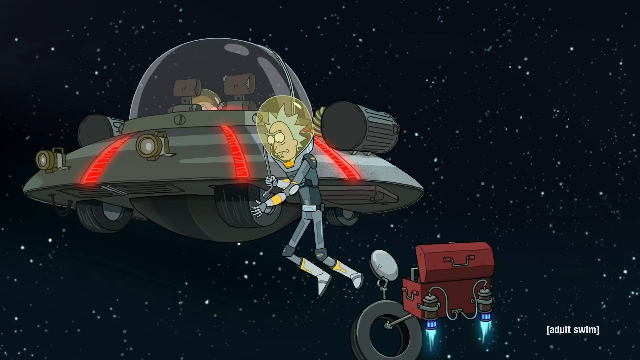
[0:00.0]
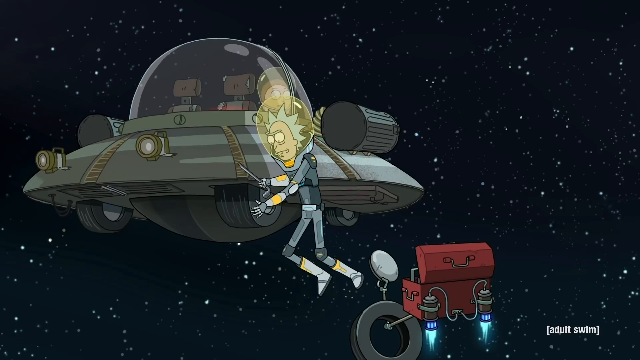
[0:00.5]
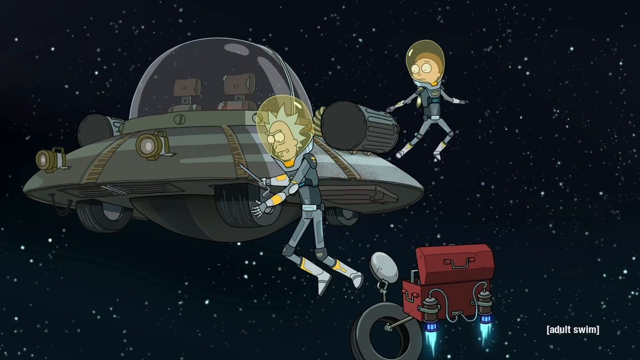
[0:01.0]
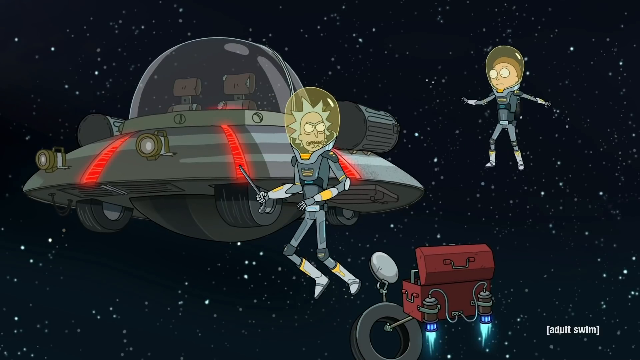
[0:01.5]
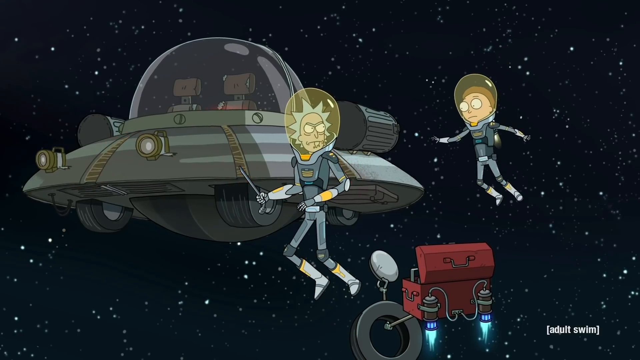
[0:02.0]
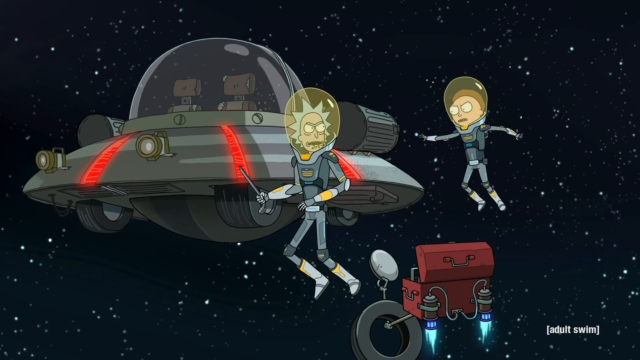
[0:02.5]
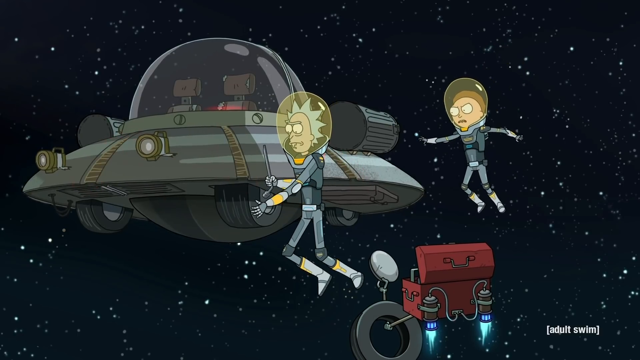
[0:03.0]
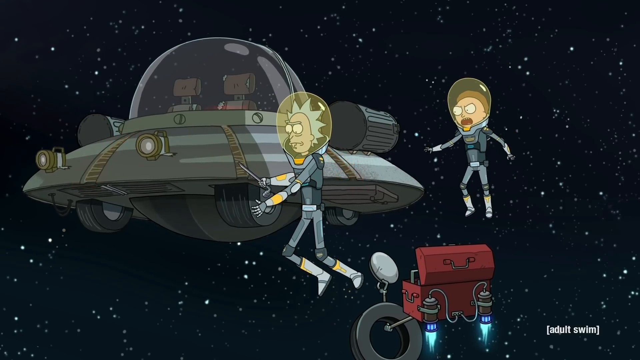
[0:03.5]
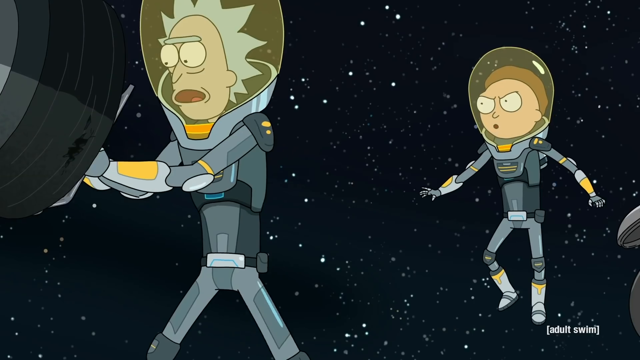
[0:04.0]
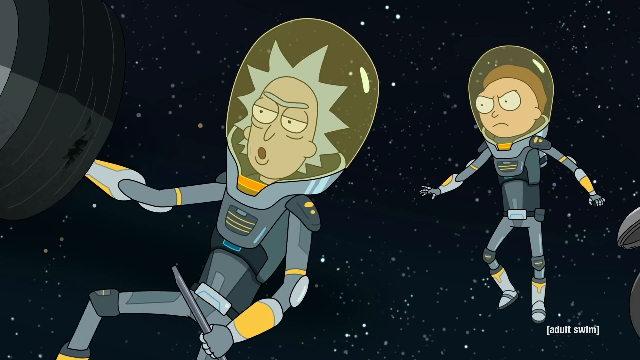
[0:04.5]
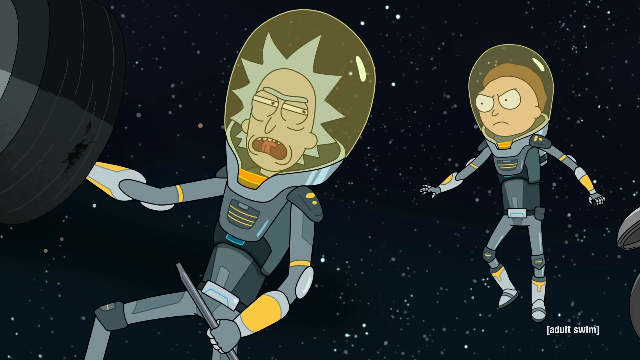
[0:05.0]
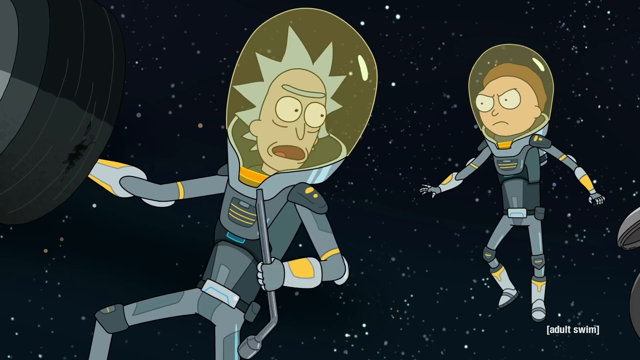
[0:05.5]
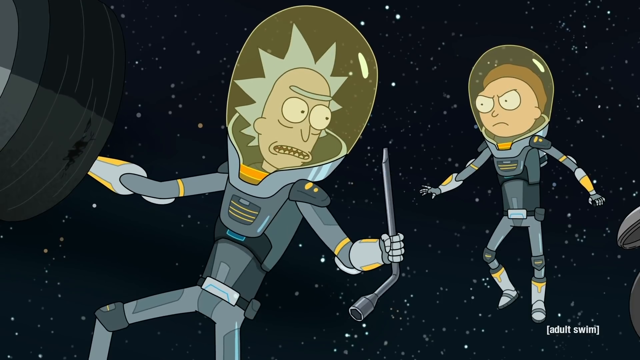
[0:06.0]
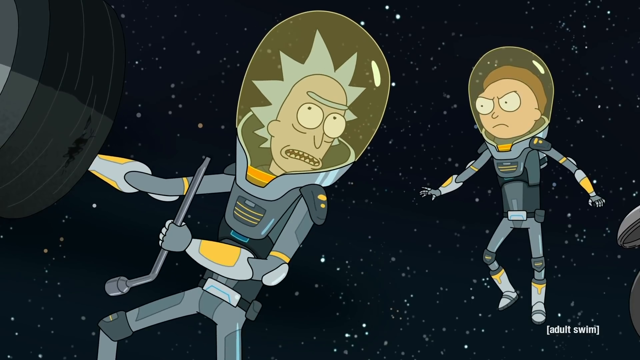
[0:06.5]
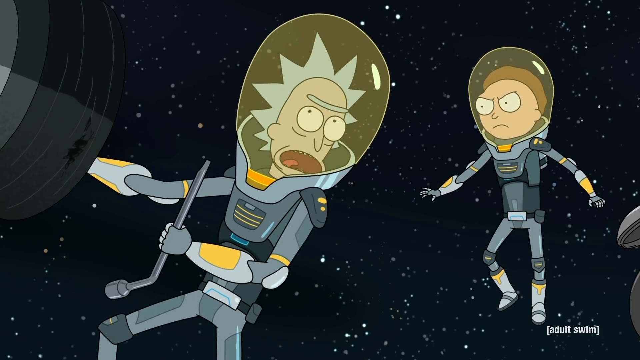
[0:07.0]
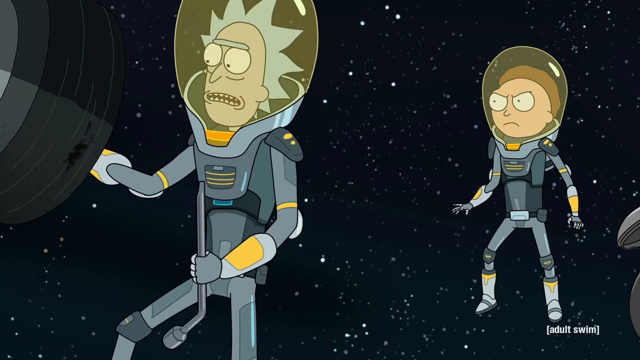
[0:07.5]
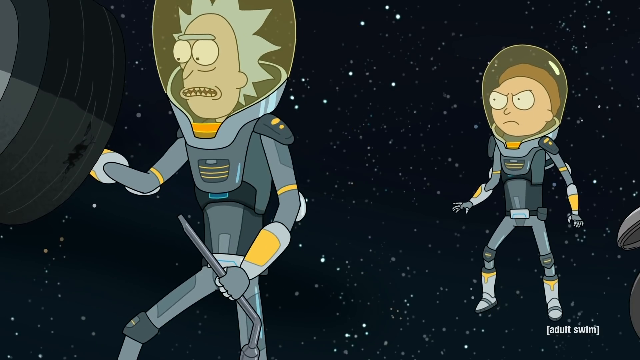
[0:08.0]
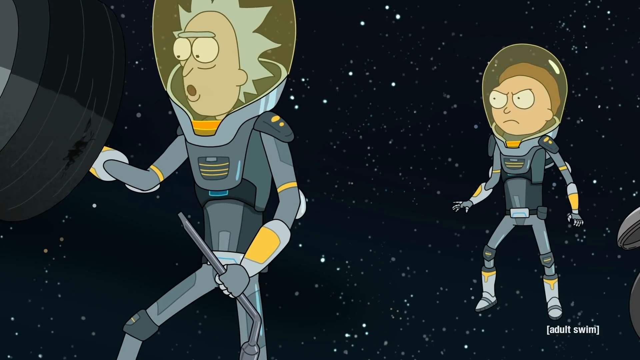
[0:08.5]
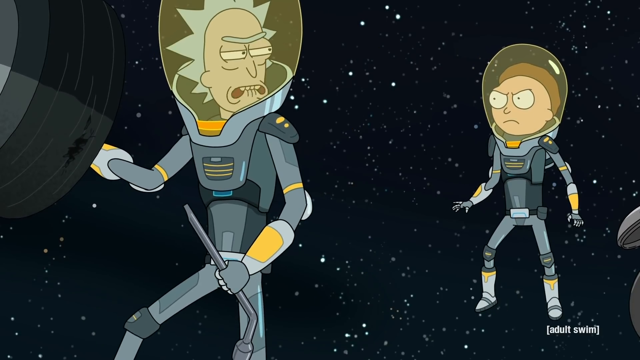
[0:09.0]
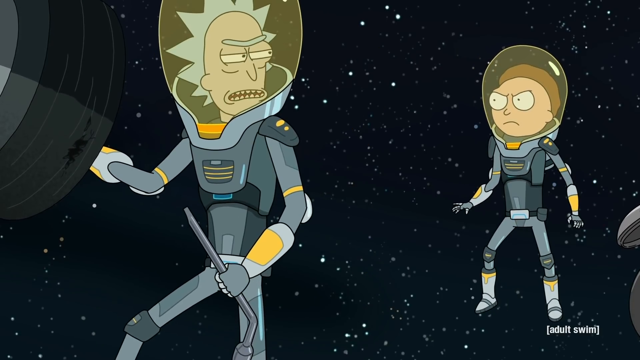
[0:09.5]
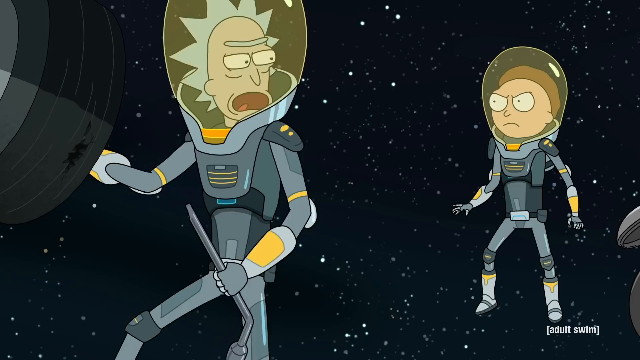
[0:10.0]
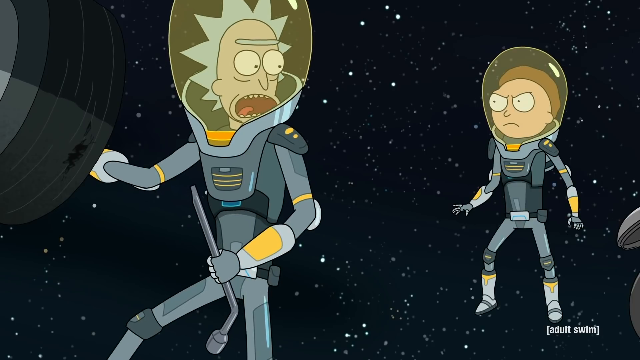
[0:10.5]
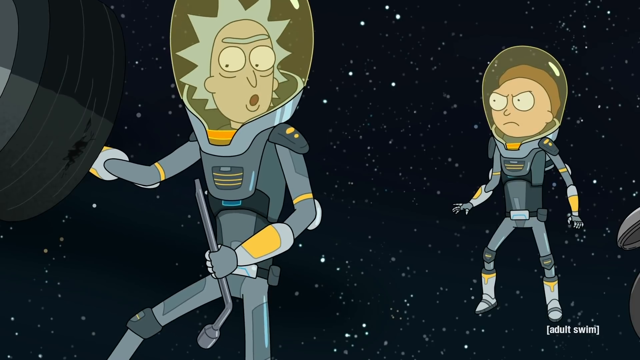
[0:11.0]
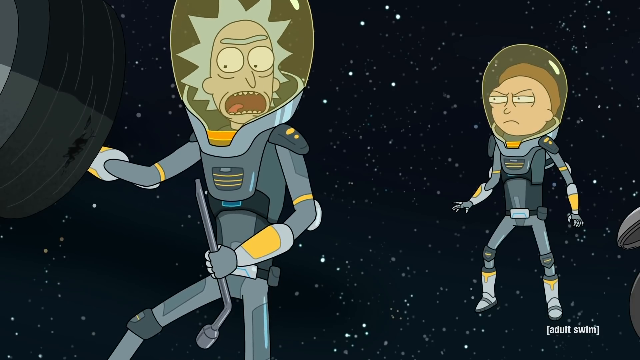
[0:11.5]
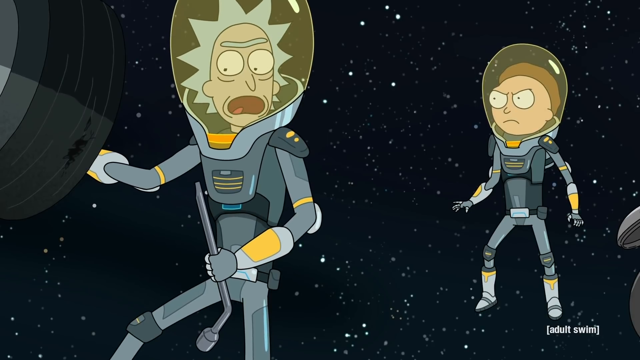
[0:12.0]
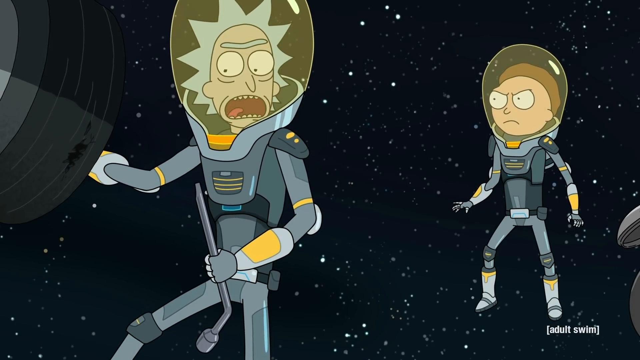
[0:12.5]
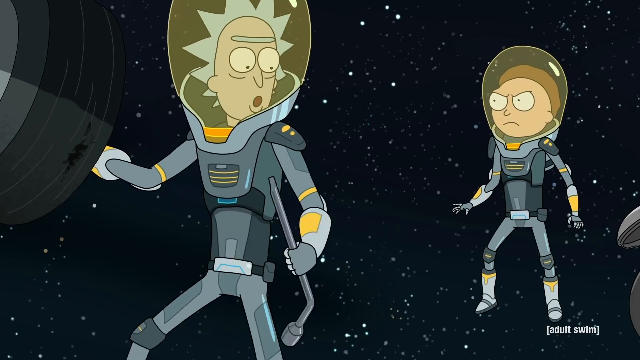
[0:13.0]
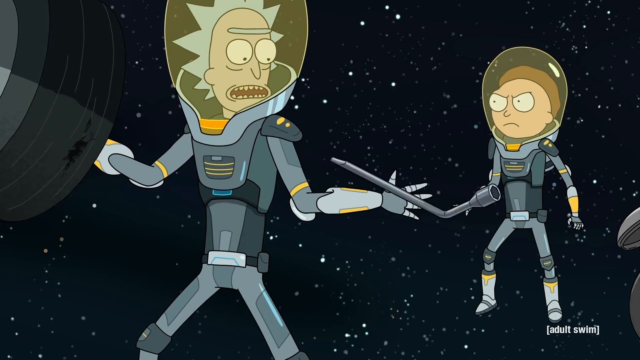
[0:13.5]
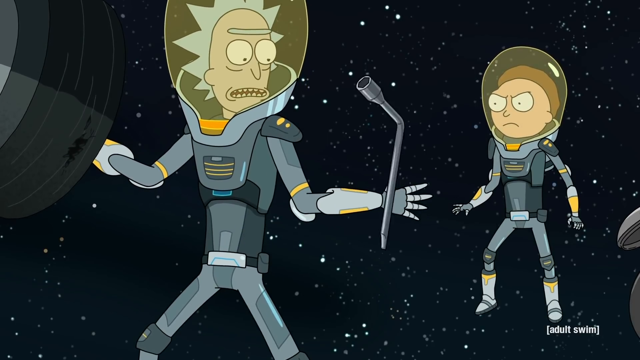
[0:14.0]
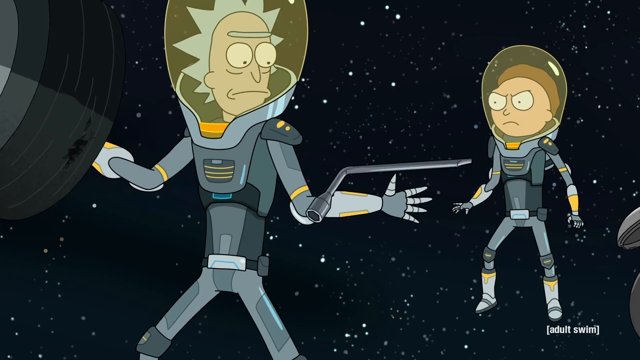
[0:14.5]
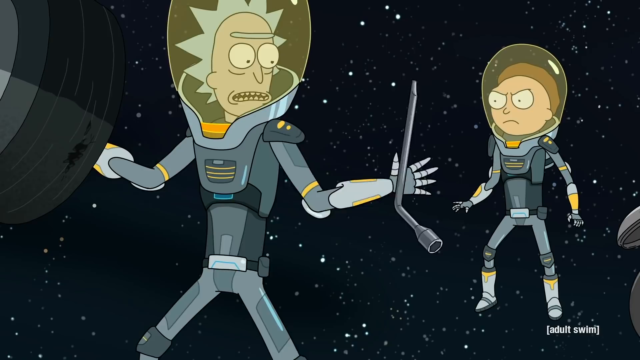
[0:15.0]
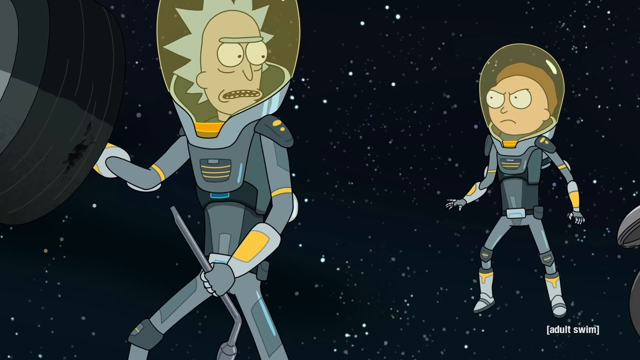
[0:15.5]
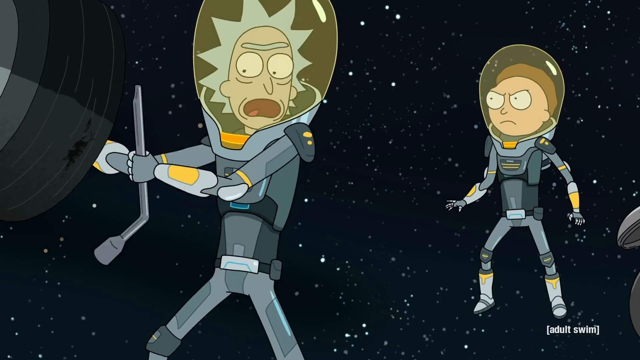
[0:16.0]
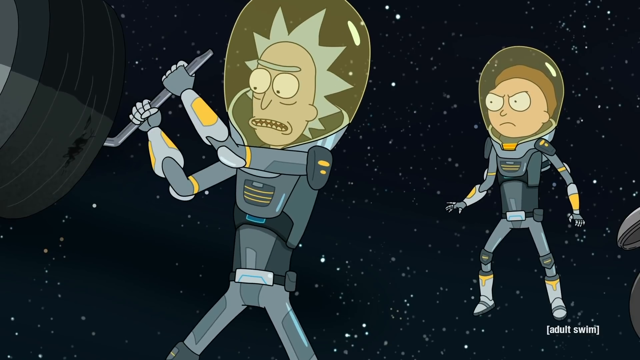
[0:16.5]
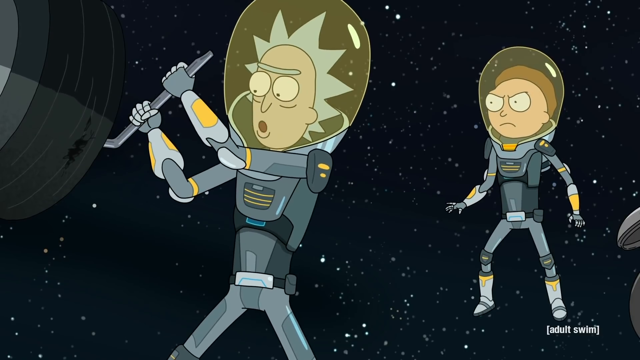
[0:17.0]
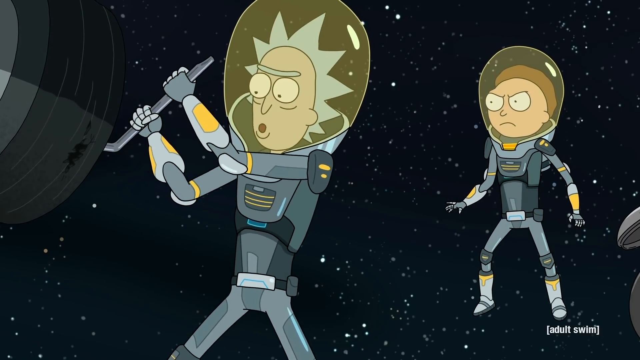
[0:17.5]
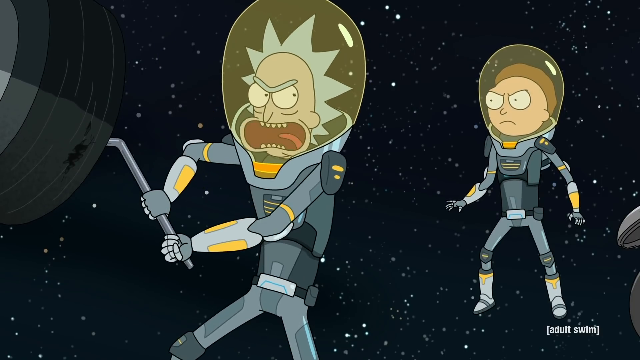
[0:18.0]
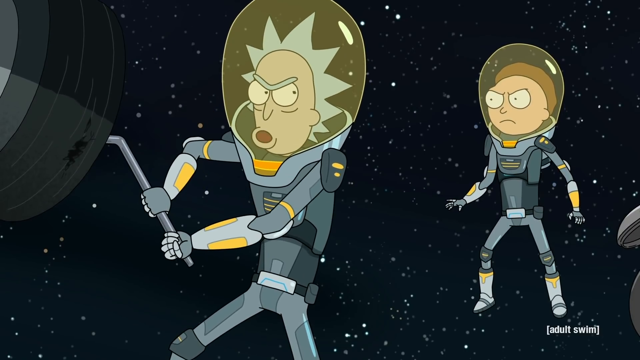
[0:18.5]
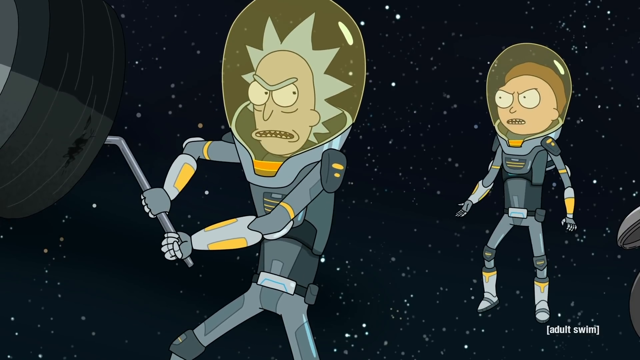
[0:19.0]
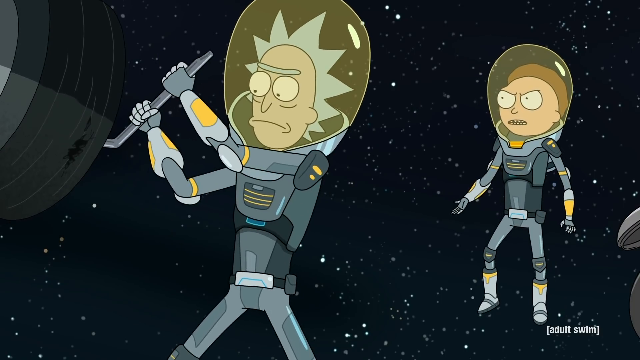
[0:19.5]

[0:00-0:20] Two cartoon astronauts float around a spaceship, and one talks very fast to the other through his helmet. He twirls a crowbar in his left hand, then holds it with two hands and tries to pry open part of the spaceship. The spaceship is suspended in the air, with red lines that are flashing lights. One astronaut looks to be older, with whitish hair visible in his helmet; the other is younger, with brown hair, and is a lot smaller. Stars are visible behind him against the black night sky, and the two are suspended in the air. Very close to where they are working there is a toolbox with jets behind it that keep it upright; it also looks like it has a spare part and a light.